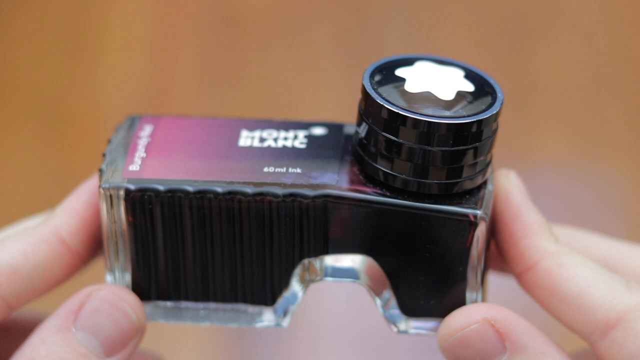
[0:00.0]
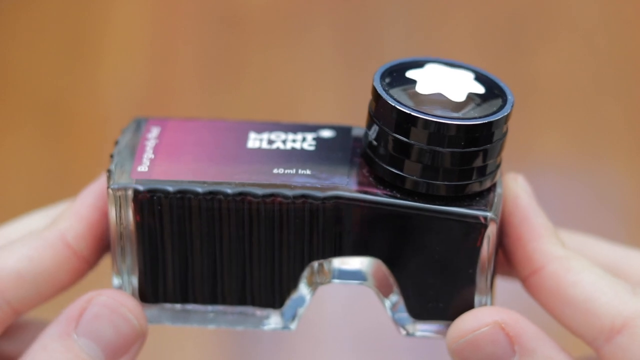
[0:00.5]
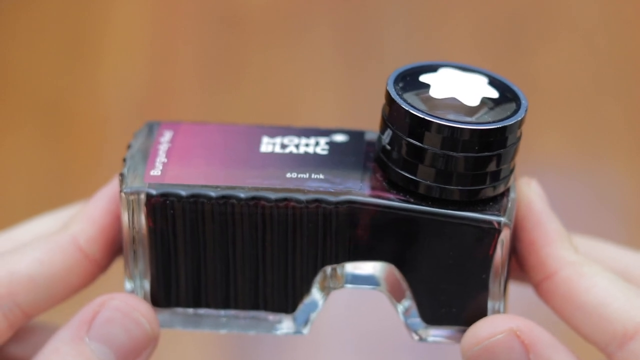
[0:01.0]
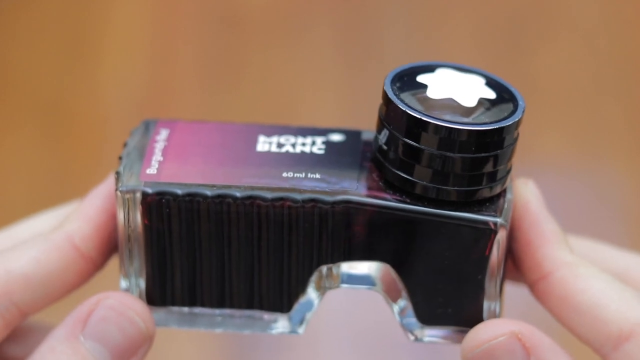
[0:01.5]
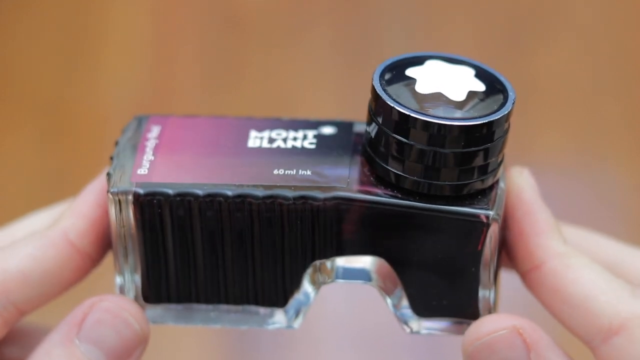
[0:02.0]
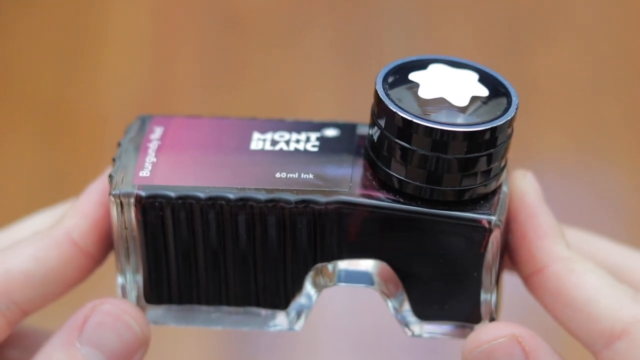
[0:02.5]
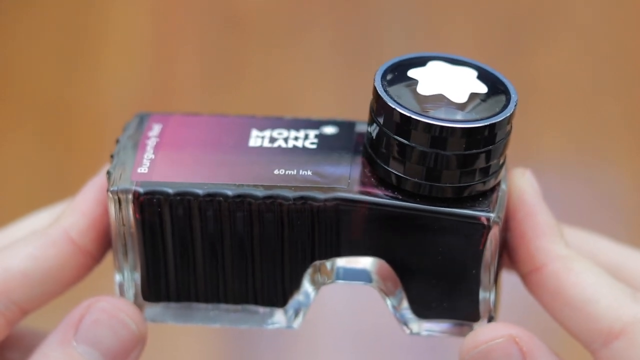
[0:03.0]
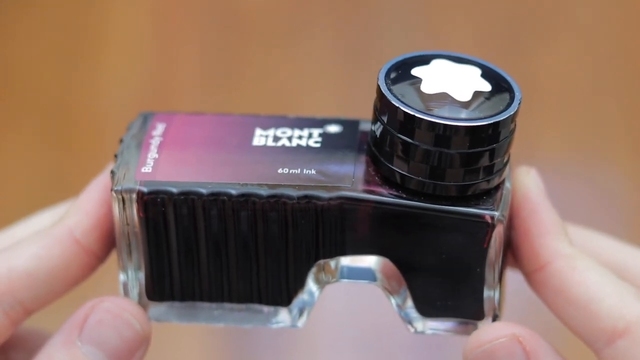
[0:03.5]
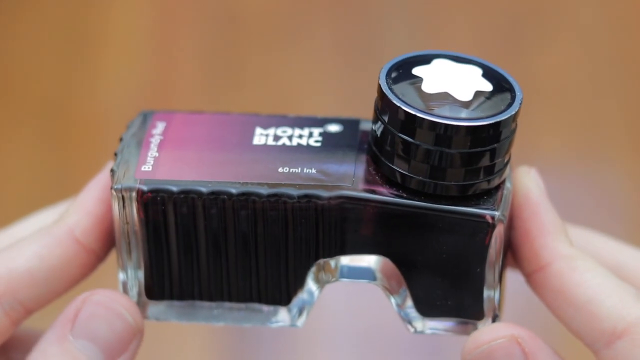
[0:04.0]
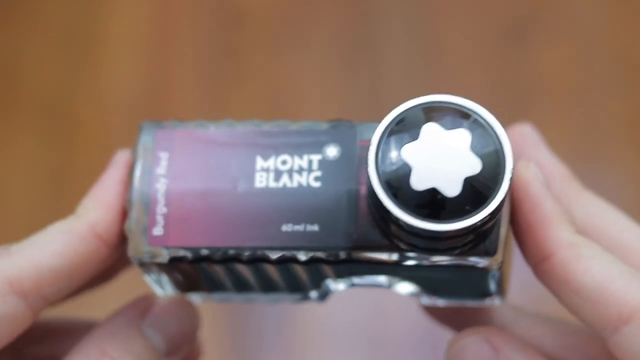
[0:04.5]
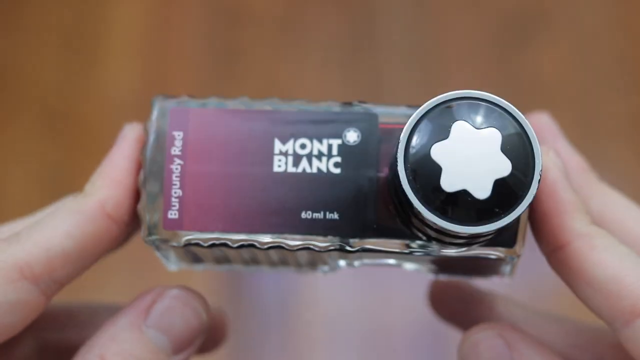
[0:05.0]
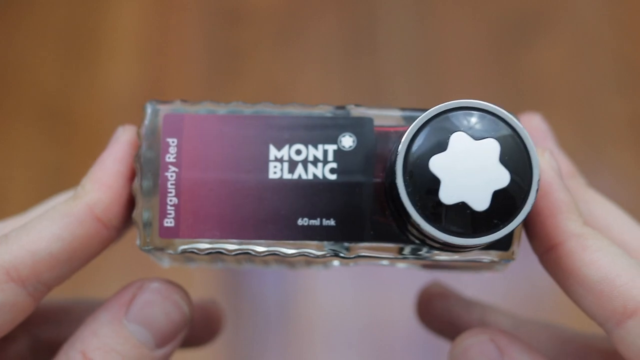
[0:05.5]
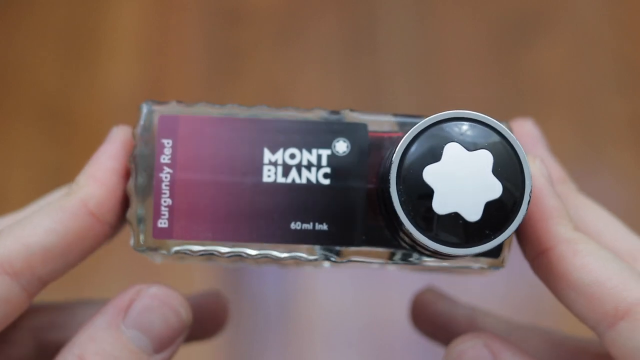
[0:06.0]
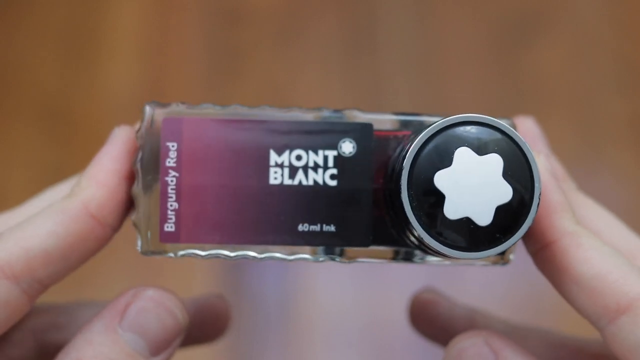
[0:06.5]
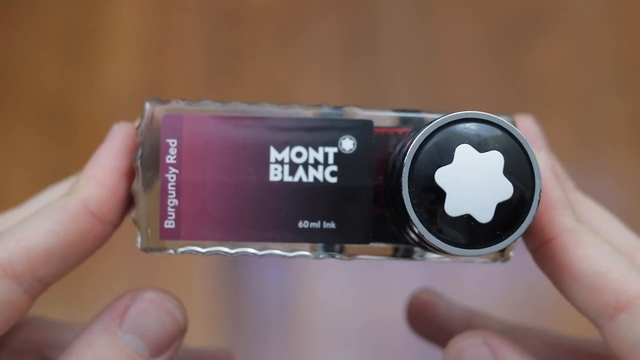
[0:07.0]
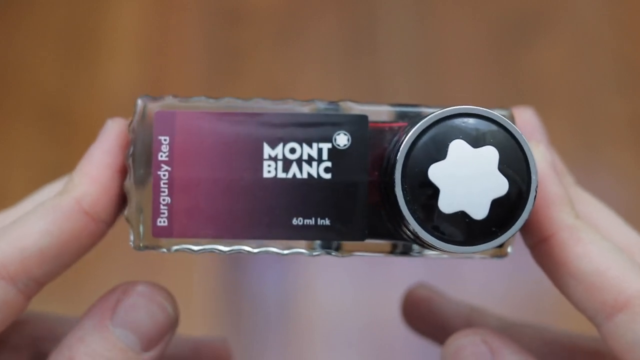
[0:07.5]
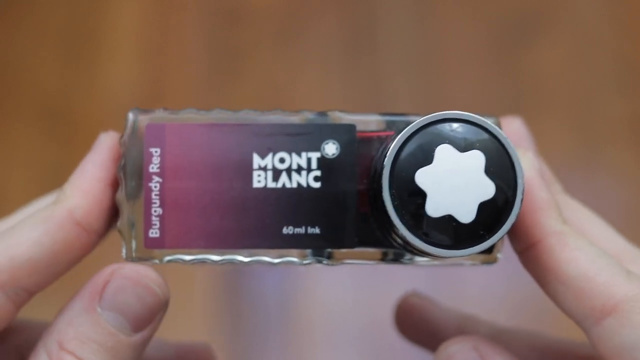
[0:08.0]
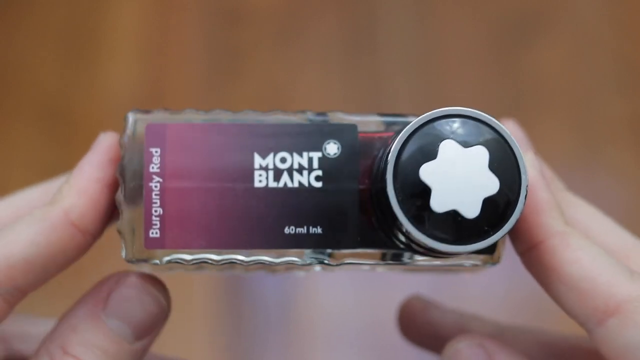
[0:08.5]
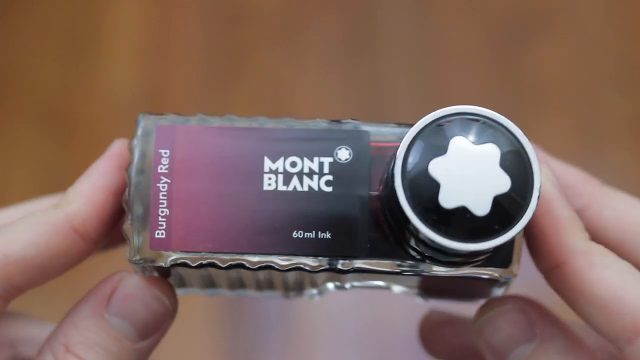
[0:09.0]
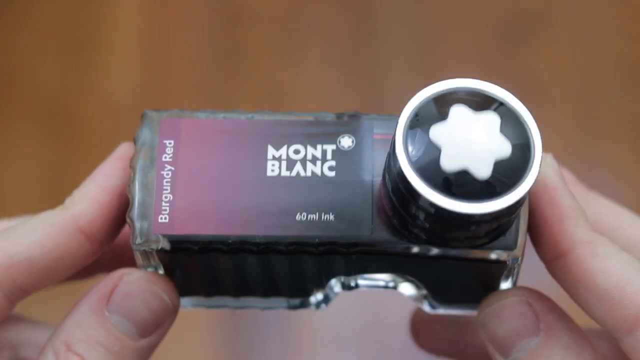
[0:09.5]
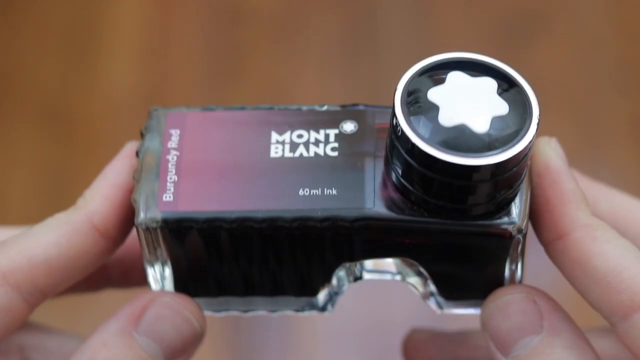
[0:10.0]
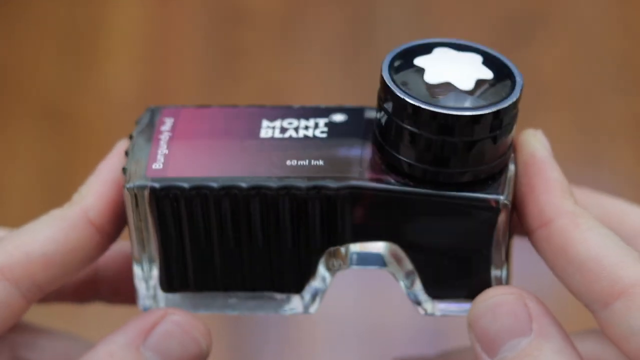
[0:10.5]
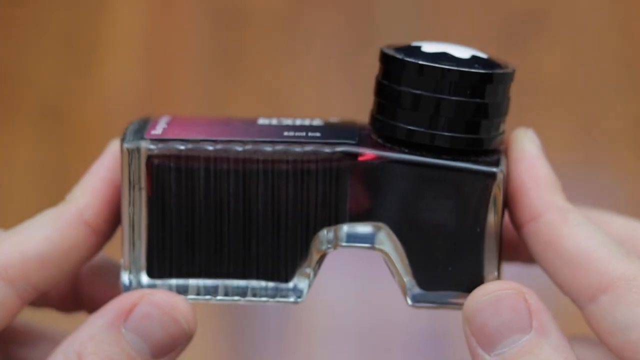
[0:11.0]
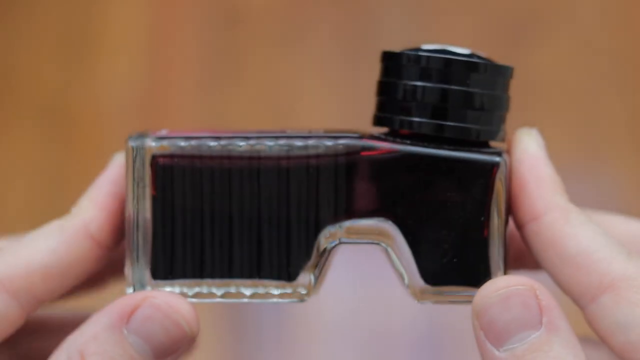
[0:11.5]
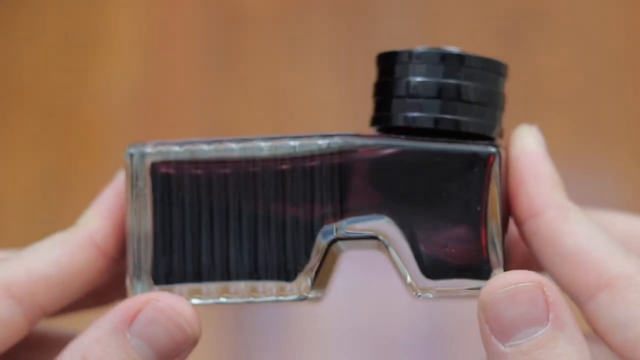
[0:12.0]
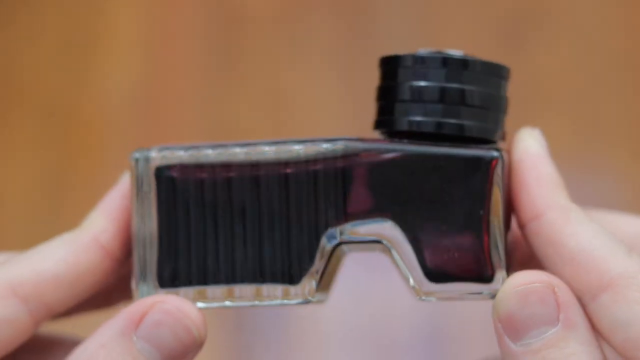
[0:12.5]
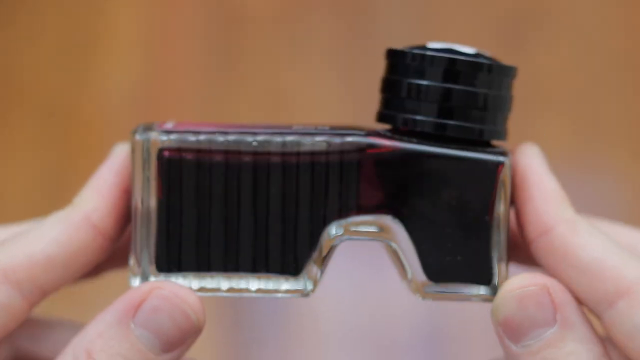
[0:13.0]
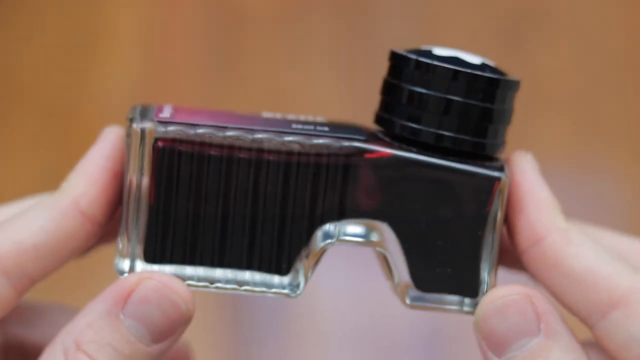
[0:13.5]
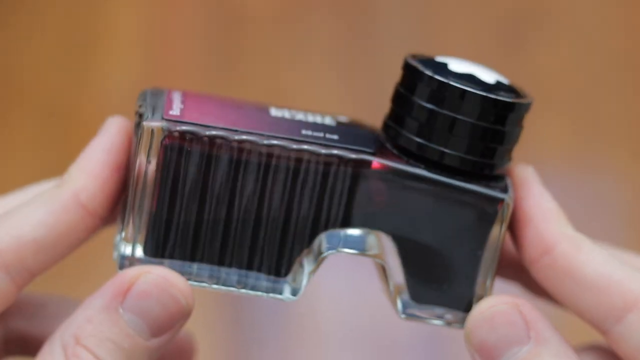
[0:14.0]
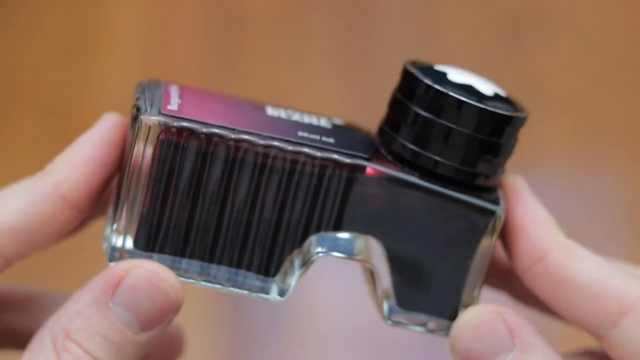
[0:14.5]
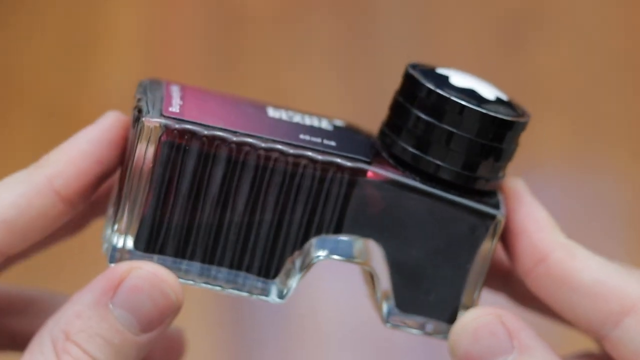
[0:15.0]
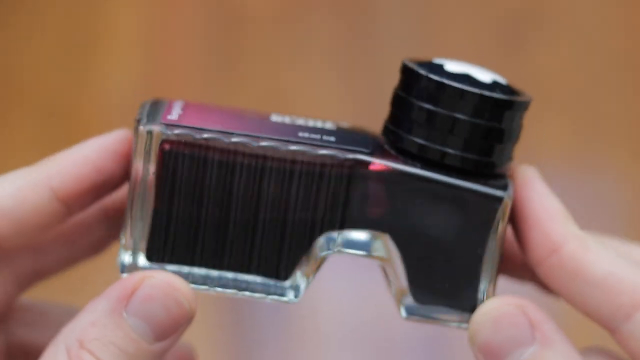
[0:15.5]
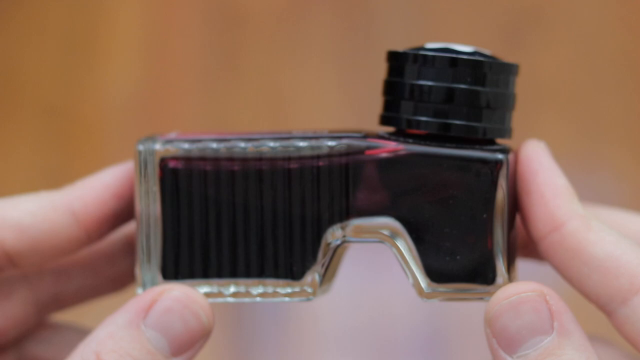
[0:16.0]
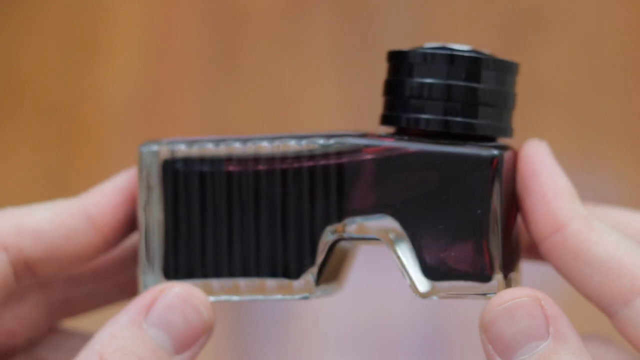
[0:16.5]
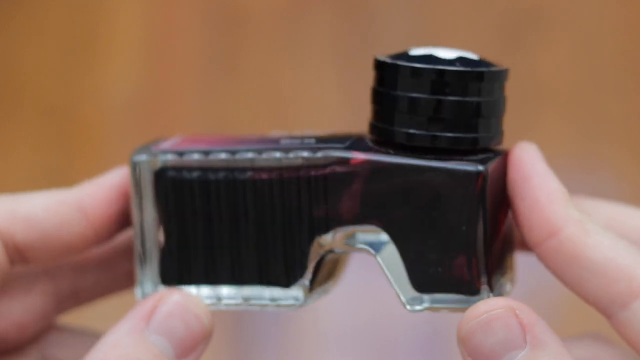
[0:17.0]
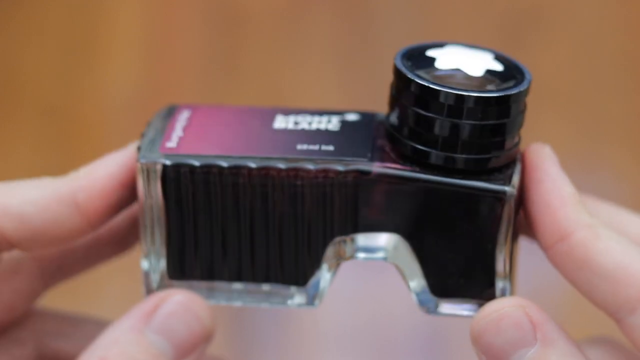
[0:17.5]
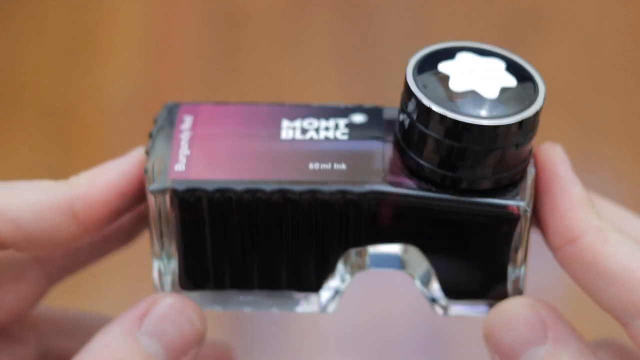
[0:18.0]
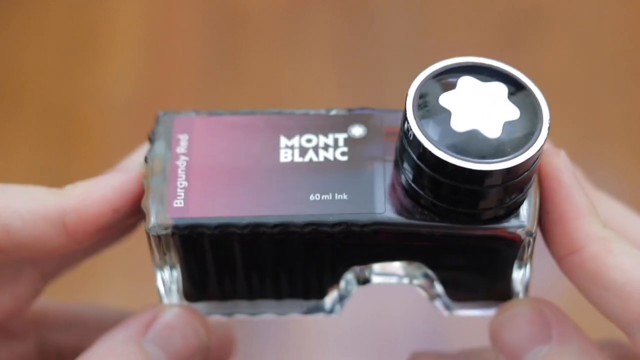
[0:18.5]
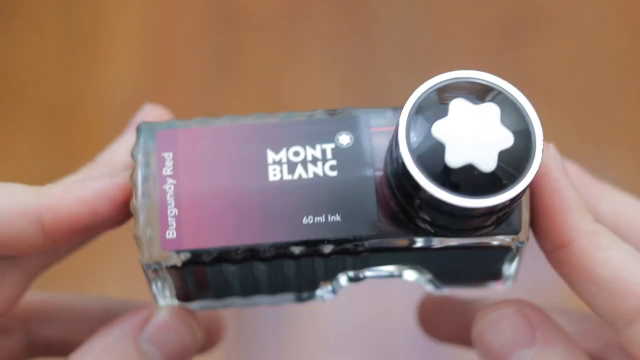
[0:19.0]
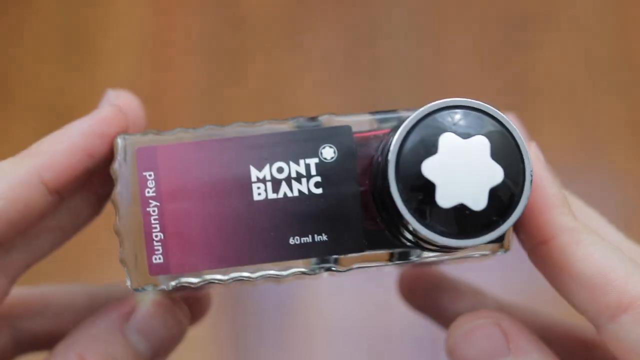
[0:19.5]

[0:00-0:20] An item is presented to the camera, held in someone's fingers; compared with the fingers, it is approximately six inches long and approximately one and a half inches tall. As the object is tilted so the camera can view its top, the words "Burgundy Red" are written along the side of the top, in white letters on a burgundy red background. The color continues along the right-hand side of the item, slowly turning to black. In the center are the words "Mont Blanc", with a small circle containing a wide six-pronged star, apparently the producing company's emblem. Below this, toward the bottom, is "40 ml ink", apparently indicating that the container holds 40 milliliters of ink. Toward the end of the item is a large six-pronged star similar to the one next to the product name. When the product is turned to the side, the large star turns out to be part of the lid. The lid is black and protrudes above the base of the ink container, and it appears that it can twist off to give access to the ink inside.